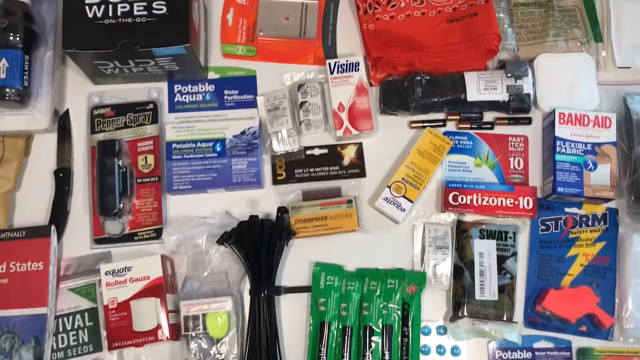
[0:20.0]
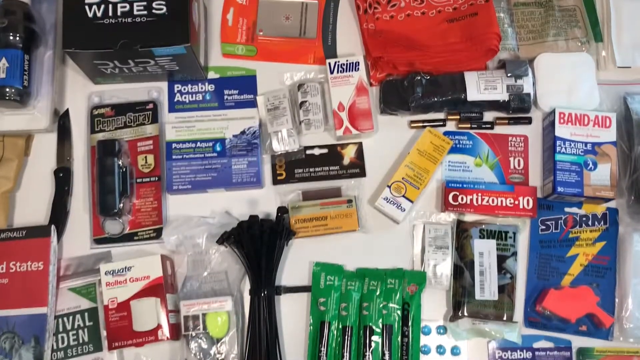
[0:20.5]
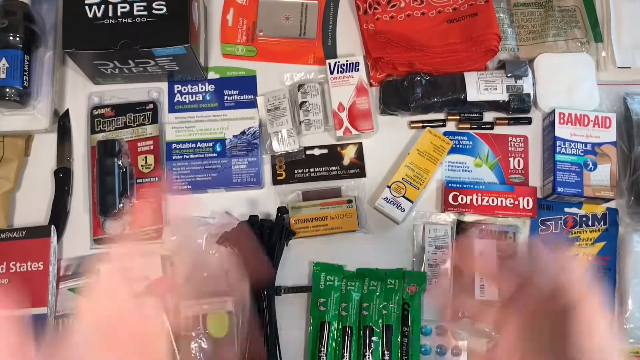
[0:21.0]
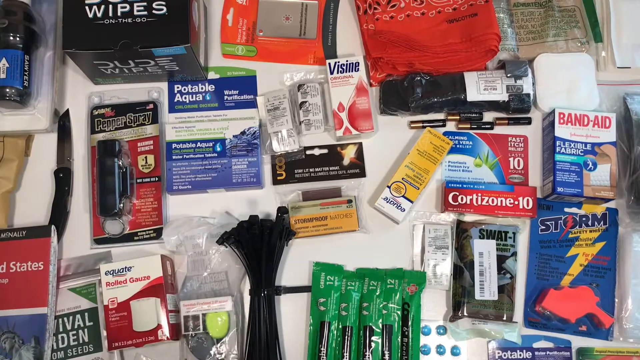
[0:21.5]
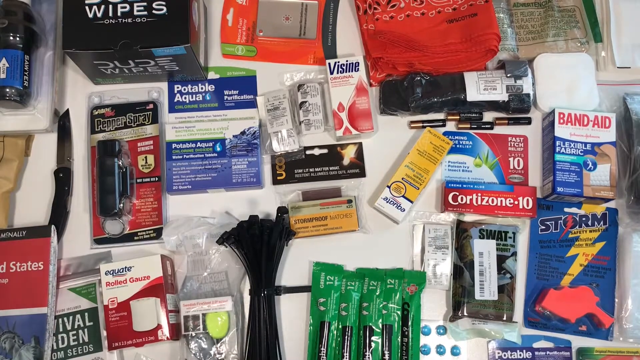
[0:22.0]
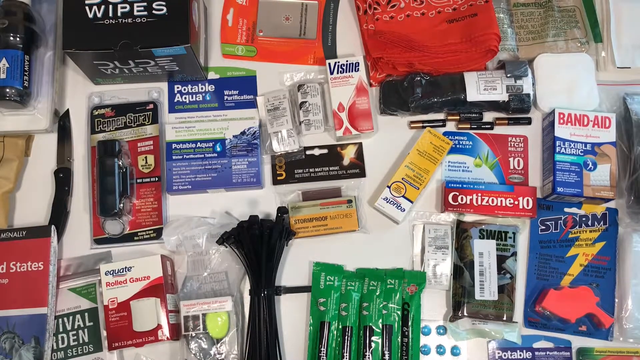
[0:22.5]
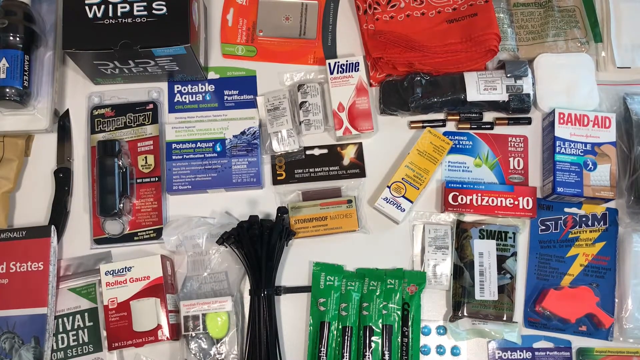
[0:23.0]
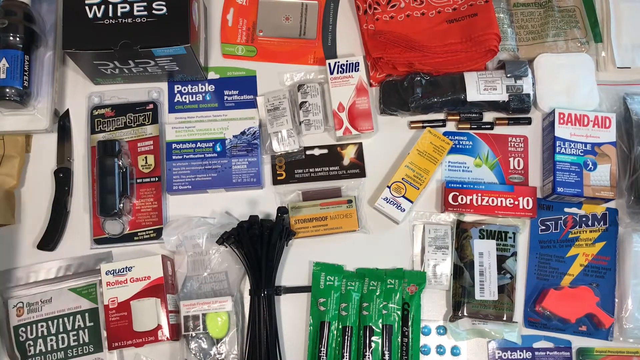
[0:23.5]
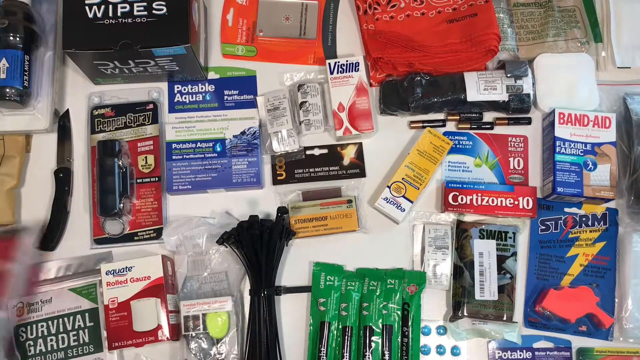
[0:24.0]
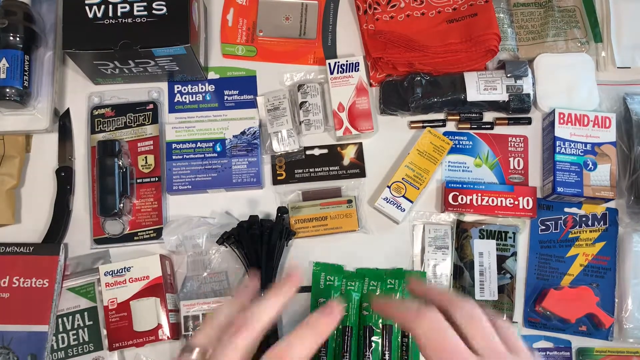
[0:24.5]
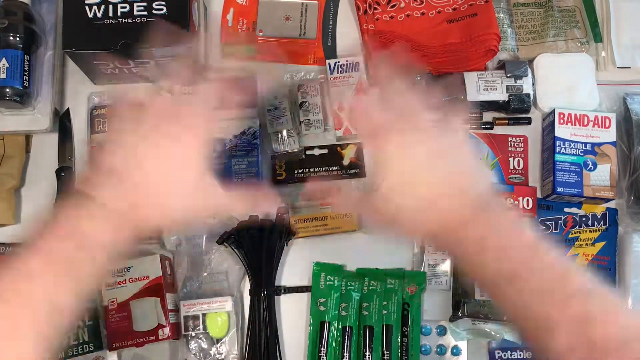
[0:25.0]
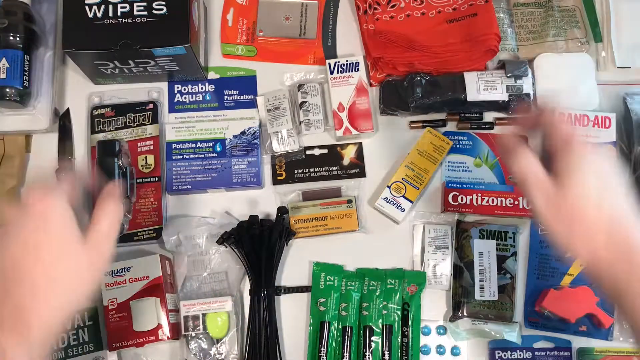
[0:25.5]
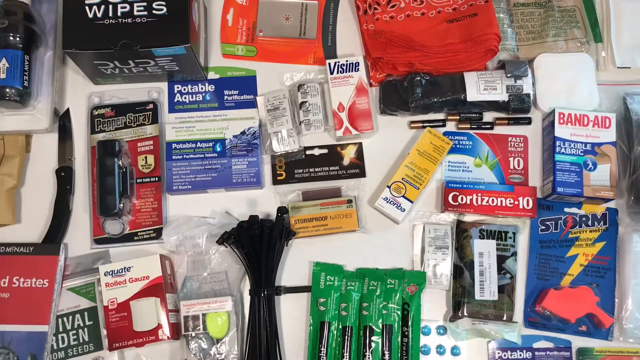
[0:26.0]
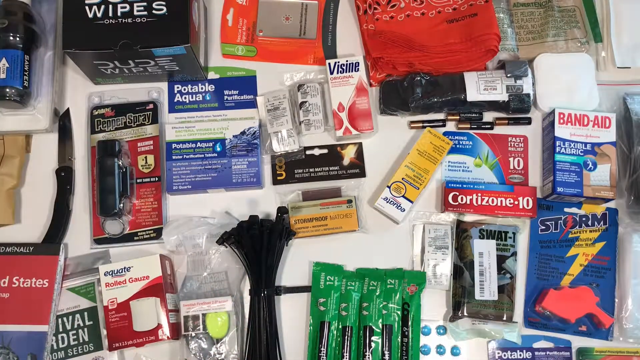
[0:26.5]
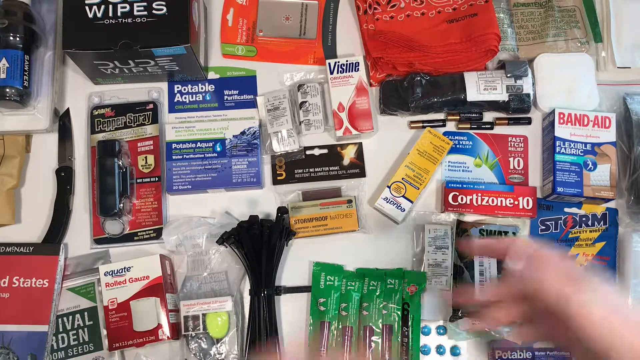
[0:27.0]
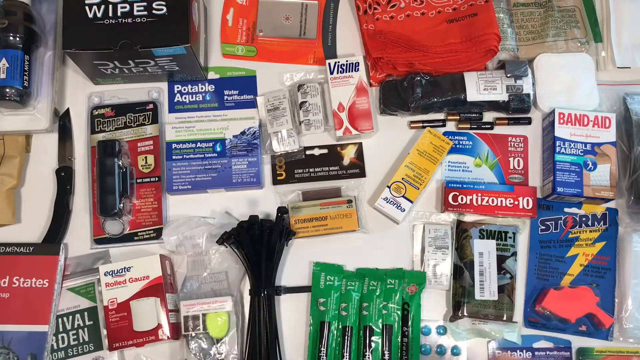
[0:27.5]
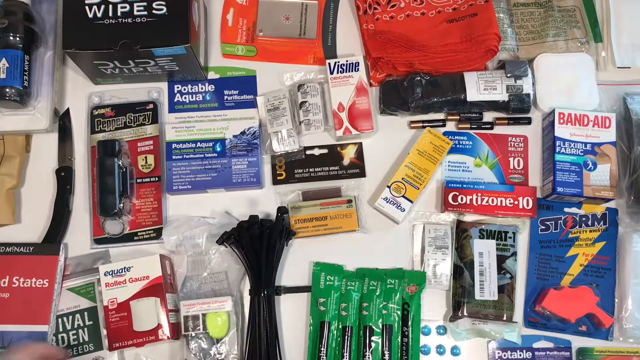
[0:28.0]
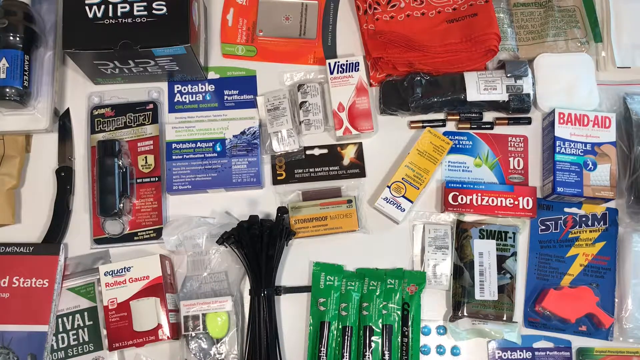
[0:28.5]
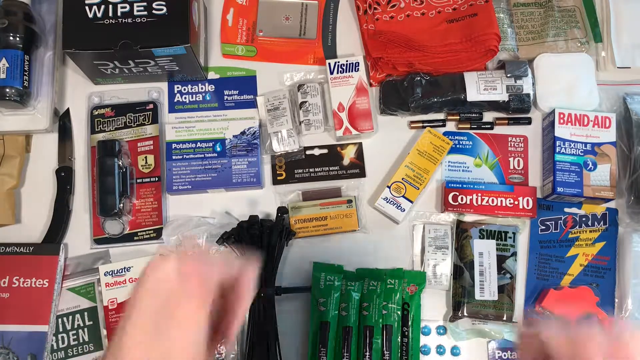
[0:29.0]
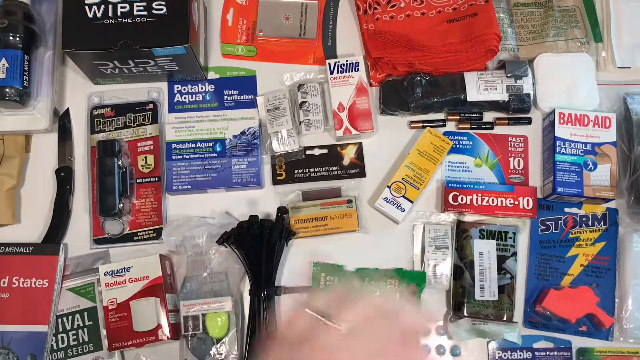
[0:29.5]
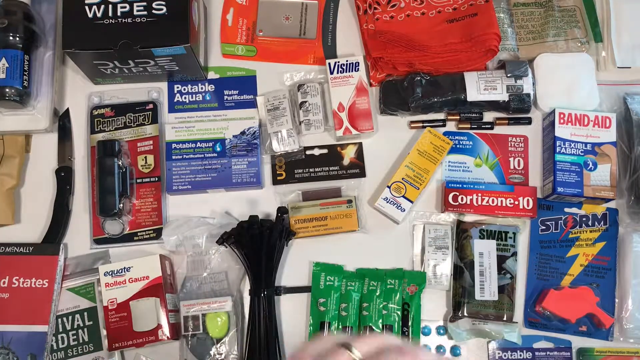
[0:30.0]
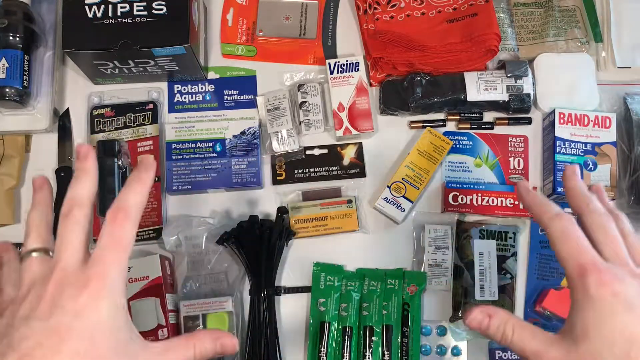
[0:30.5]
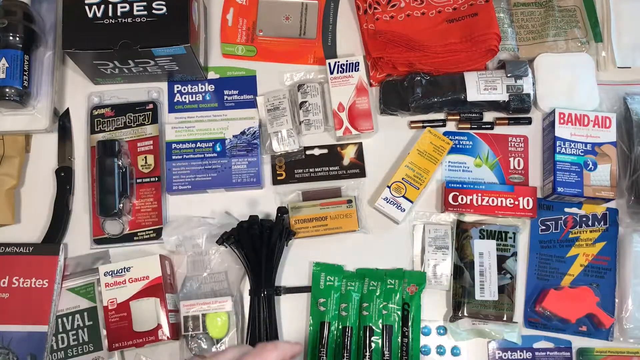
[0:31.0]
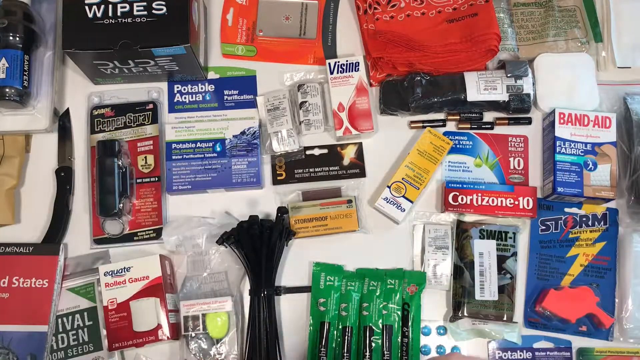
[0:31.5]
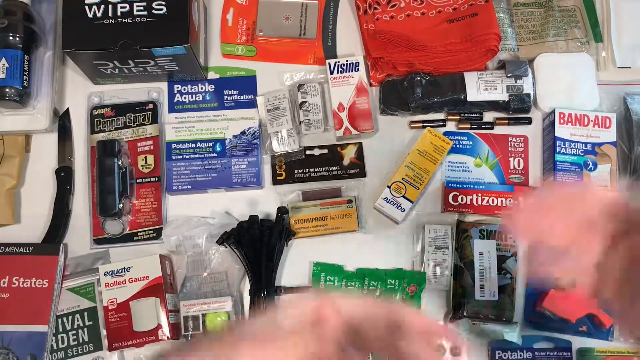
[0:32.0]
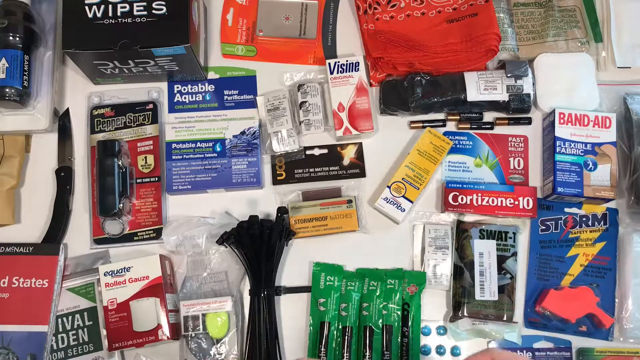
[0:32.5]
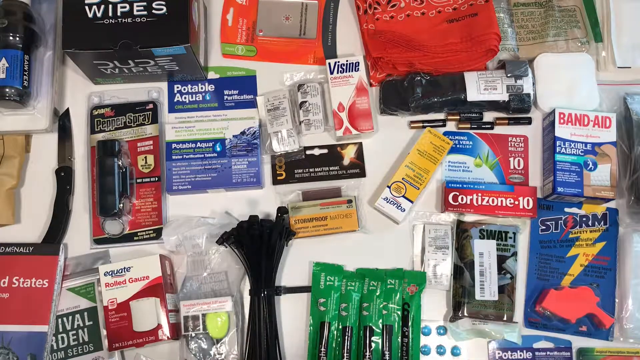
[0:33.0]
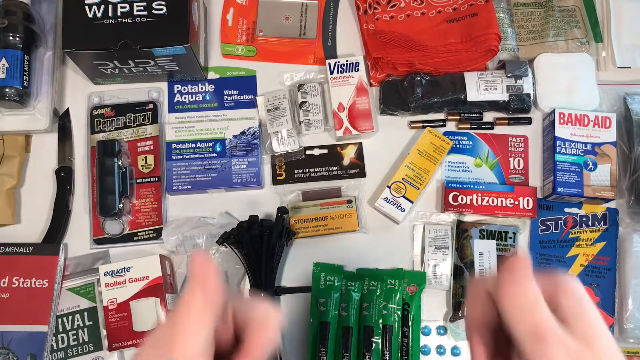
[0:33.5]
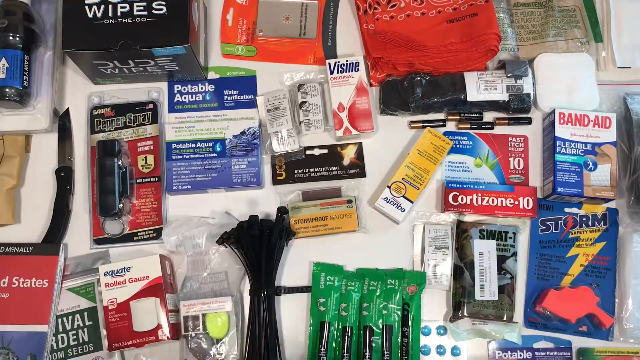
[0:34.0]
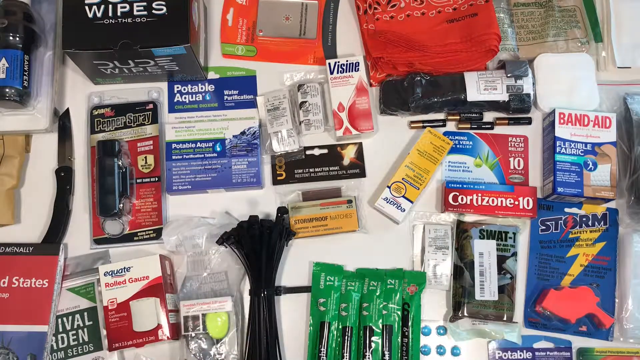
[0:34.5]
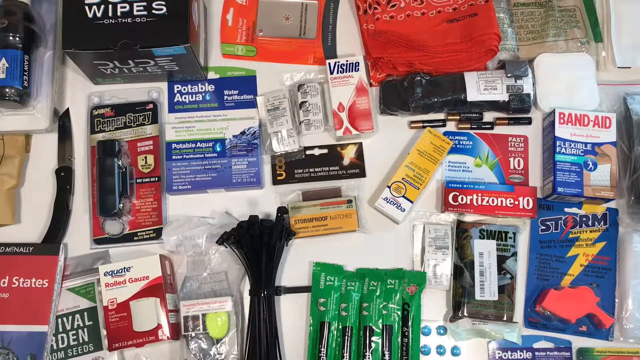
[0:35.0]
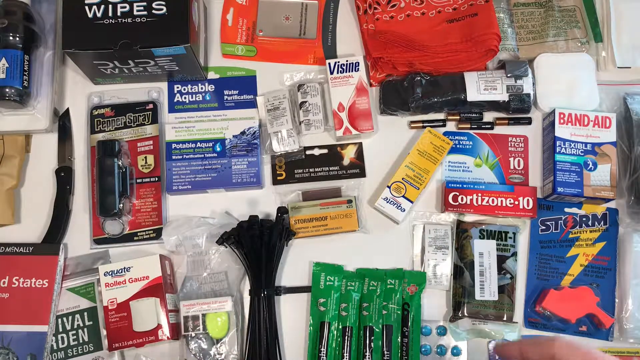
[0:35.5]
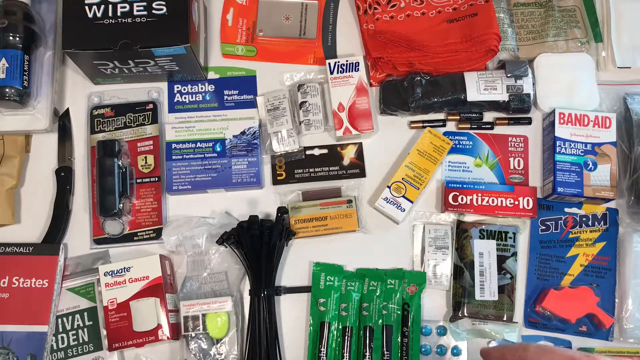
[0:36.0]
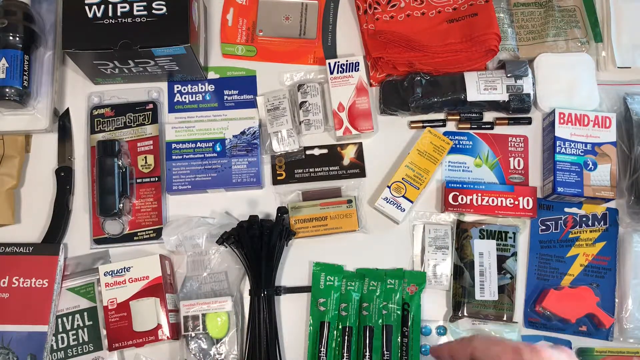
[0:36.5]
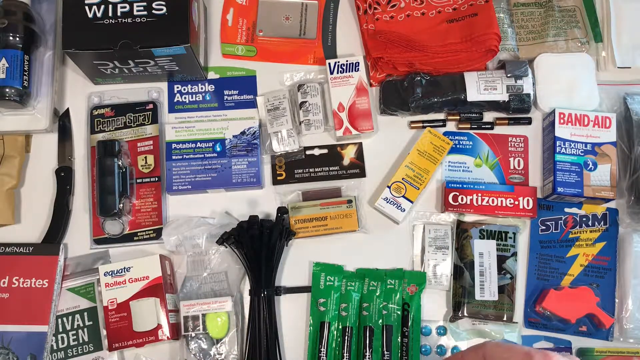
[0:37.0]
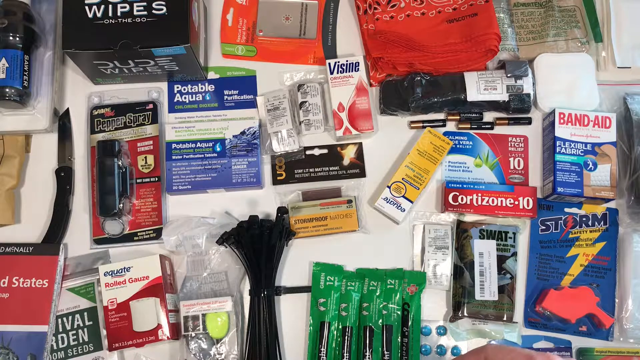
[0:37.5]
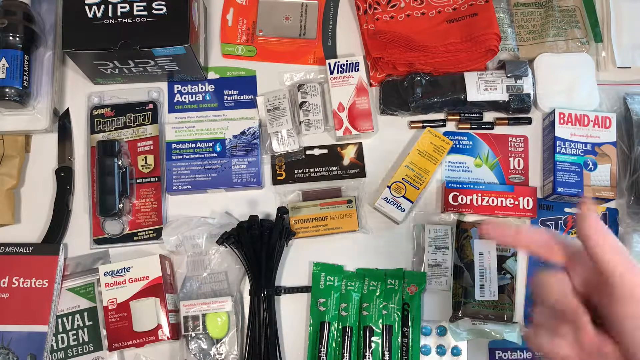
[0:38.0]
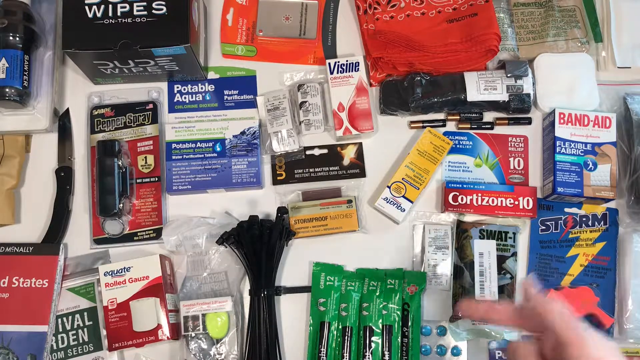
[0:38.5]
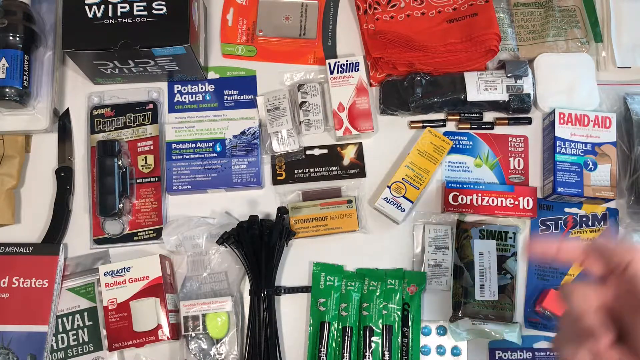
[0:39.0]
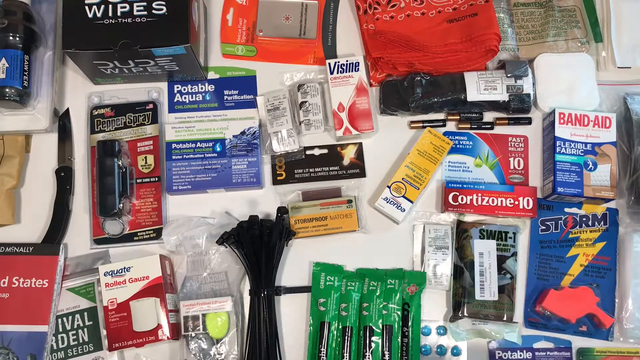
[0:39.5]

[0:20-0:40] Several health care products fill the screen from top to bottom and left to right. There are wipes, Visine, potable aqua, Band-Aids, pepper spray, rolled gauze, what appears to be latex gloves, cortisone 10 cream, a product called Storm, and various other health items. Hands gesture briefly across the bottom of the screen, then bounce back up to the left and right of the screen and keep gesturing, always coming from the bottom of the screen. The hands never really touch the products, except once when a hand moves a product with the United States printed on it that looks like a Rand McNally map; the hand briefly picks it up and puts it back down, and the product juts up and down a couple of times. The hands are Caucasian and look to be the hands of a woman.